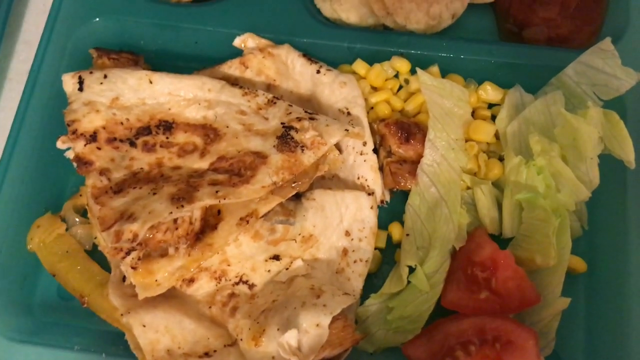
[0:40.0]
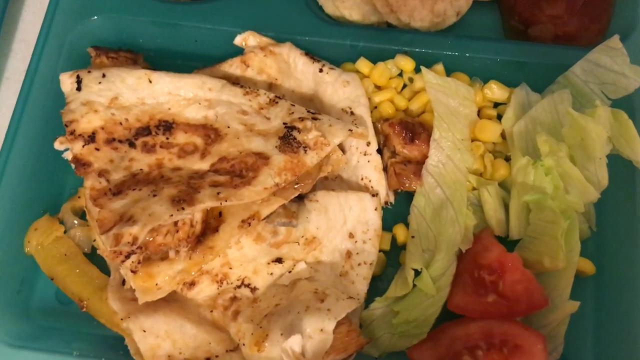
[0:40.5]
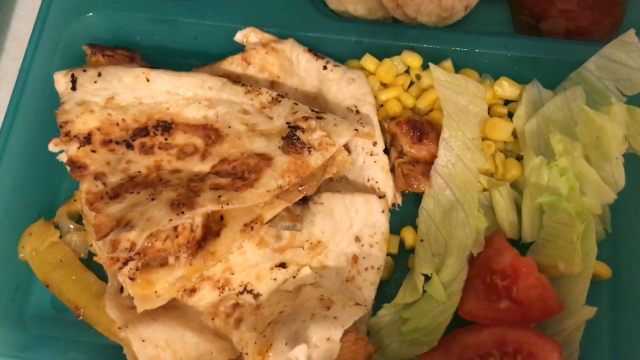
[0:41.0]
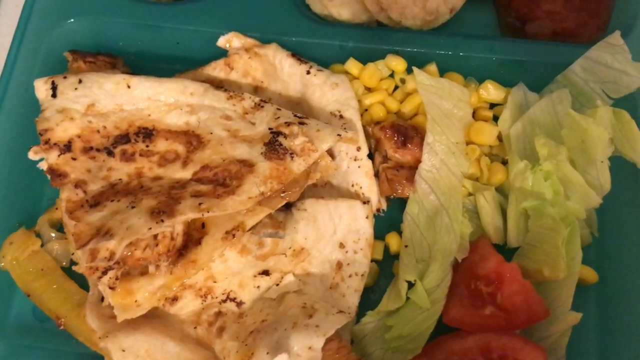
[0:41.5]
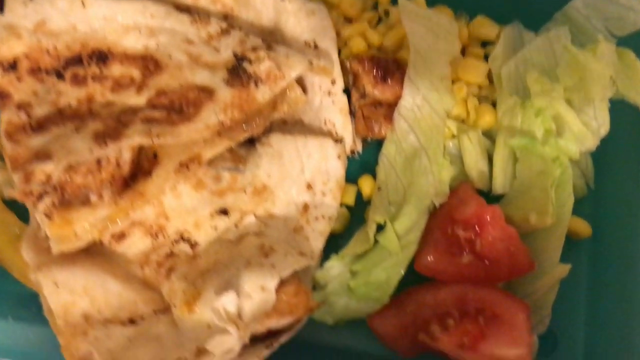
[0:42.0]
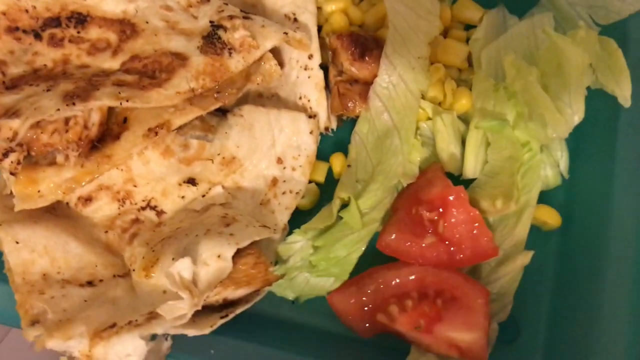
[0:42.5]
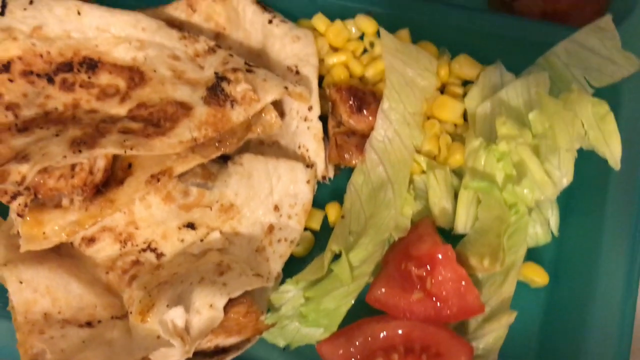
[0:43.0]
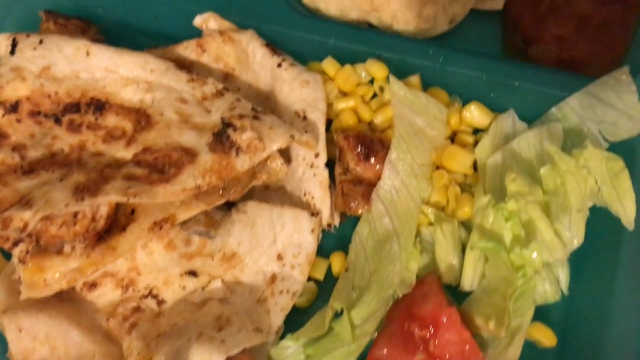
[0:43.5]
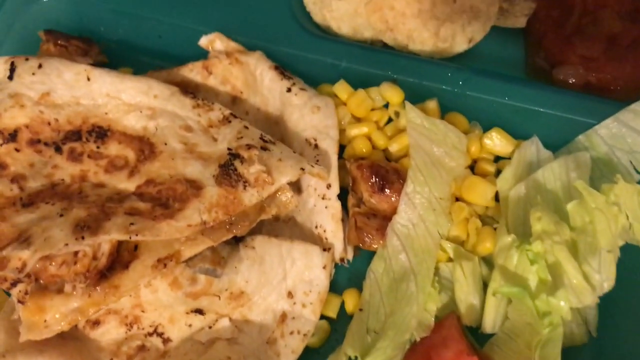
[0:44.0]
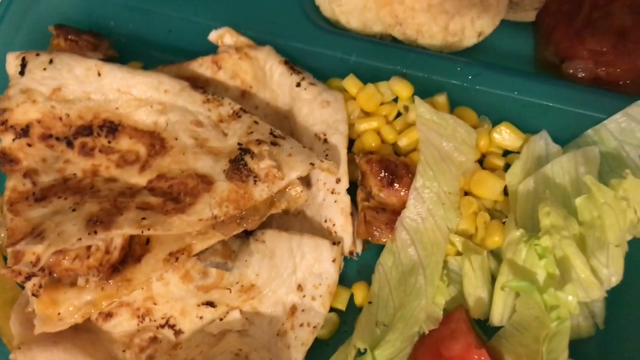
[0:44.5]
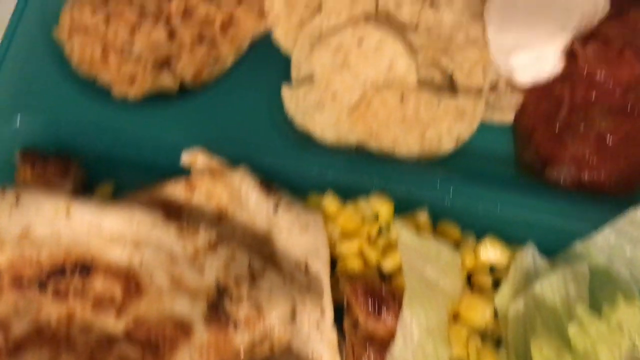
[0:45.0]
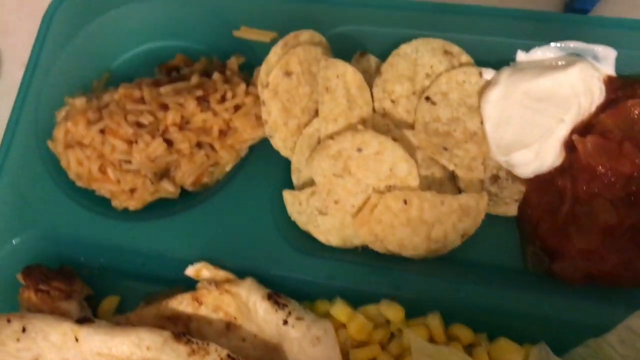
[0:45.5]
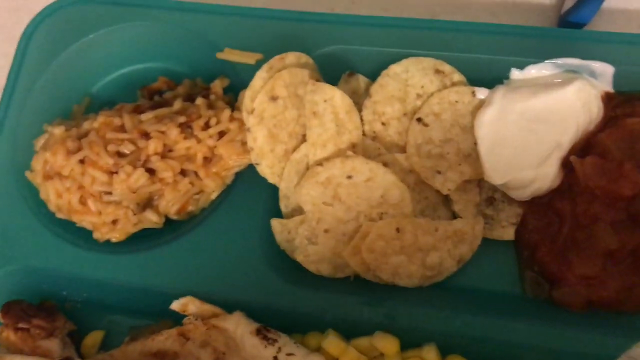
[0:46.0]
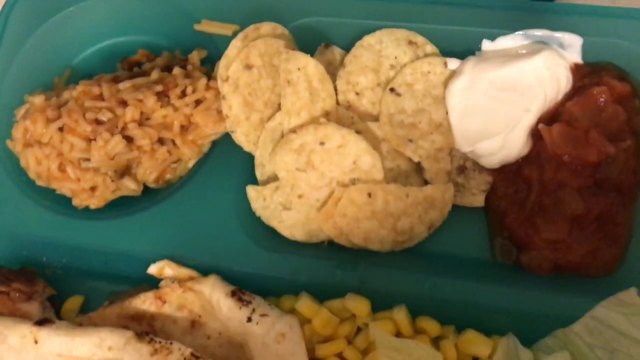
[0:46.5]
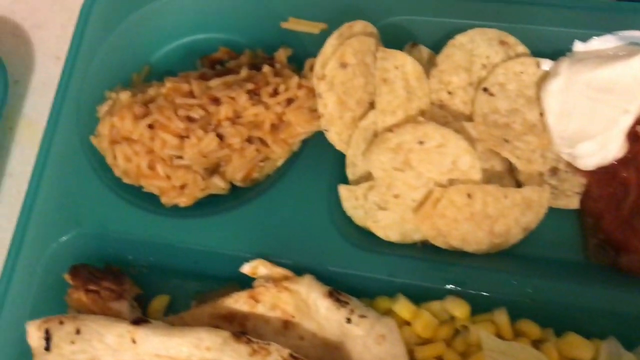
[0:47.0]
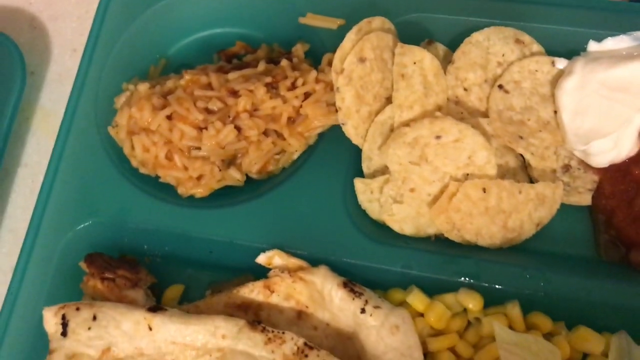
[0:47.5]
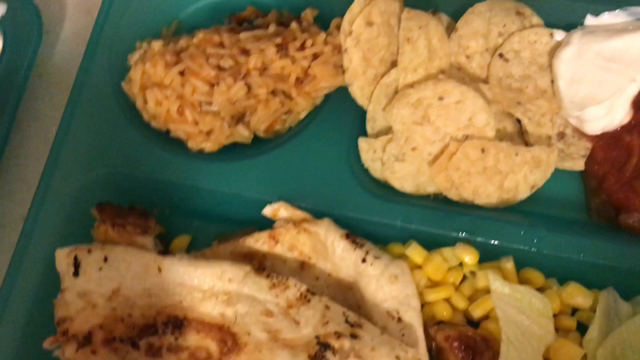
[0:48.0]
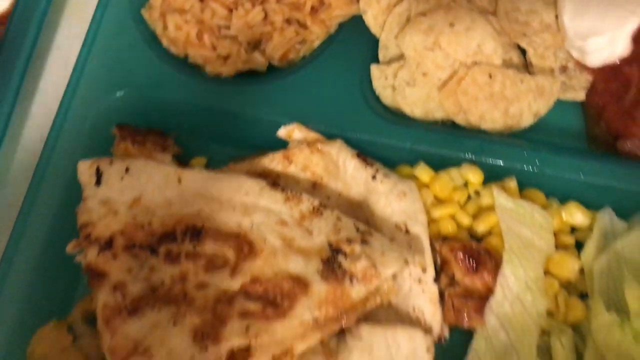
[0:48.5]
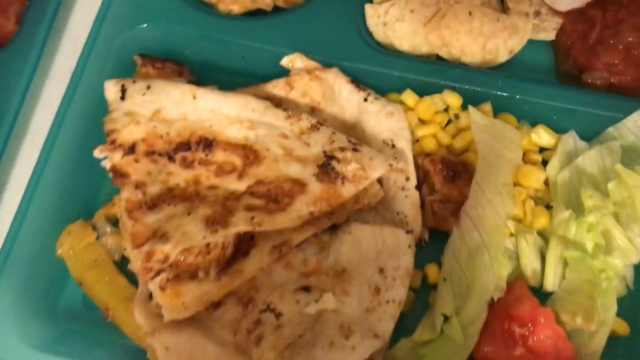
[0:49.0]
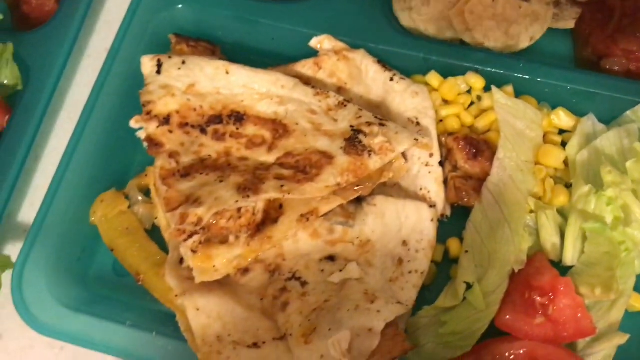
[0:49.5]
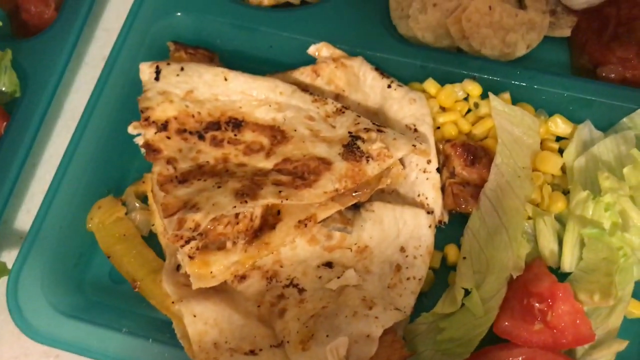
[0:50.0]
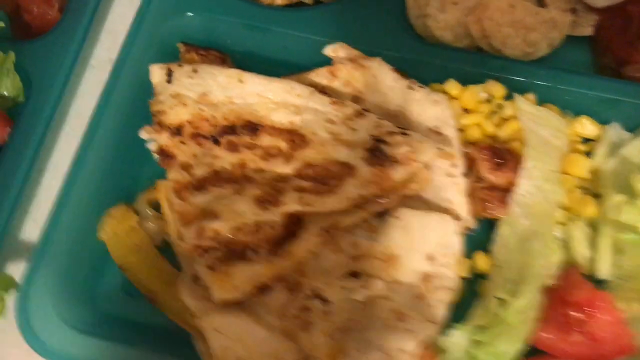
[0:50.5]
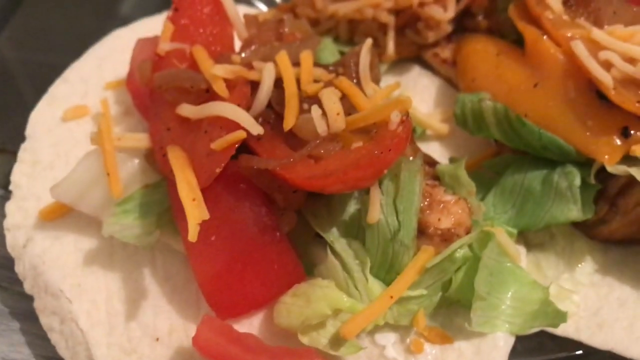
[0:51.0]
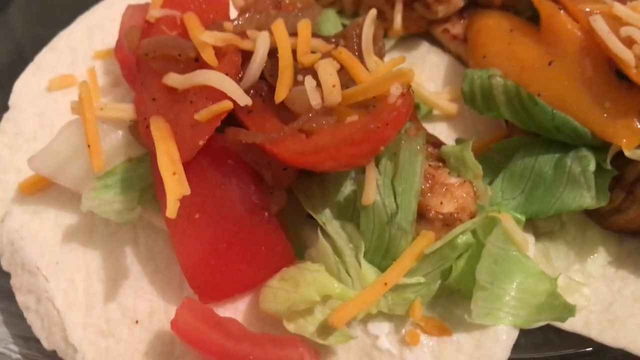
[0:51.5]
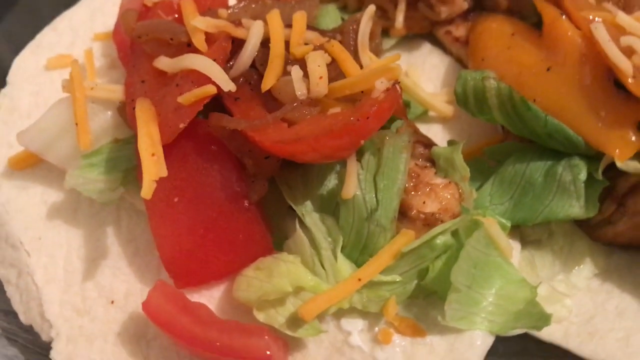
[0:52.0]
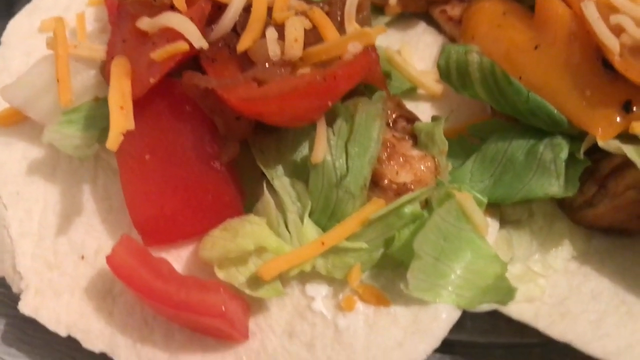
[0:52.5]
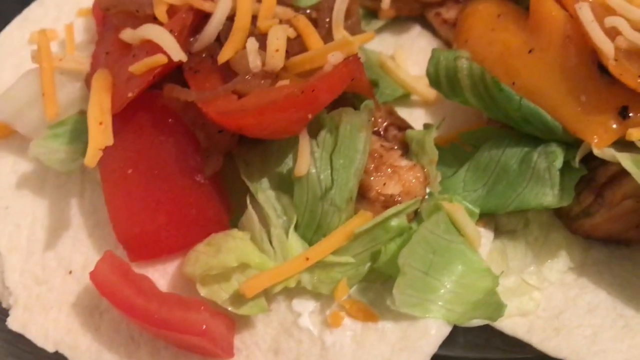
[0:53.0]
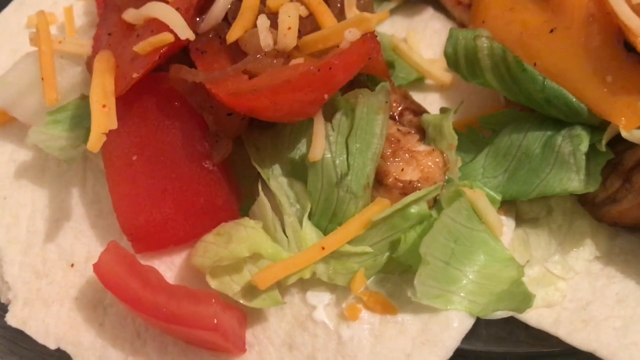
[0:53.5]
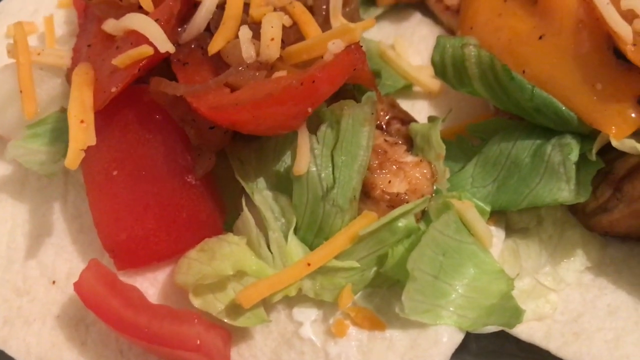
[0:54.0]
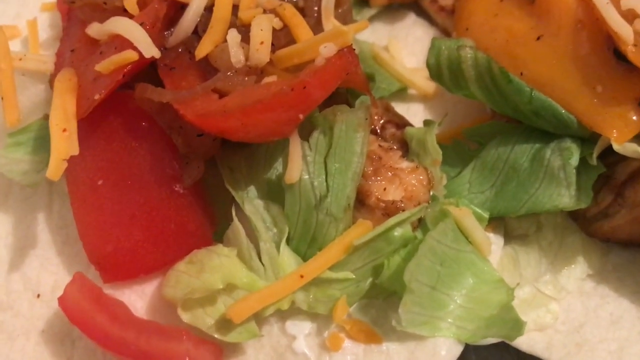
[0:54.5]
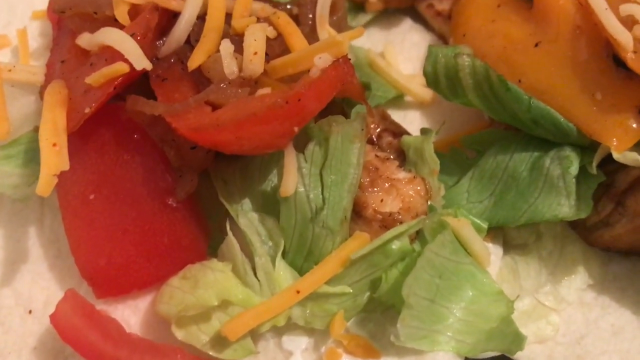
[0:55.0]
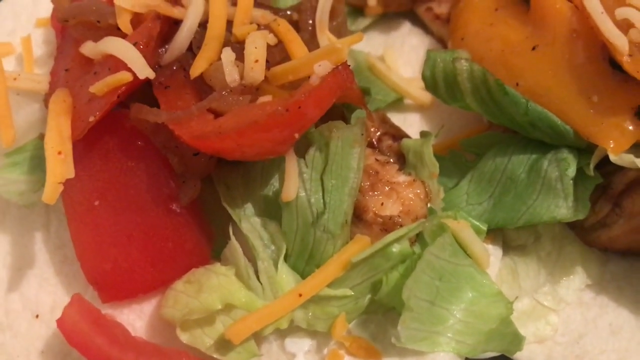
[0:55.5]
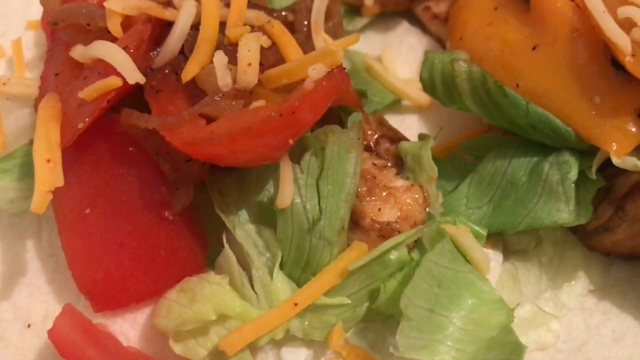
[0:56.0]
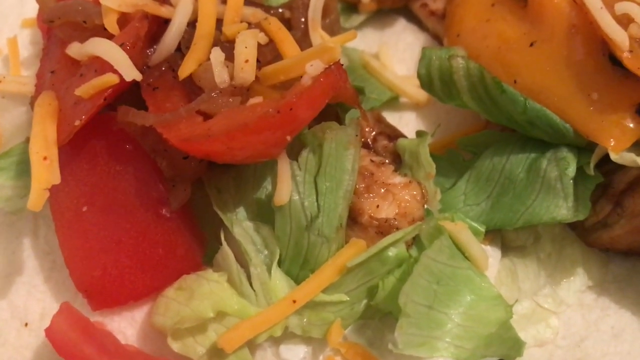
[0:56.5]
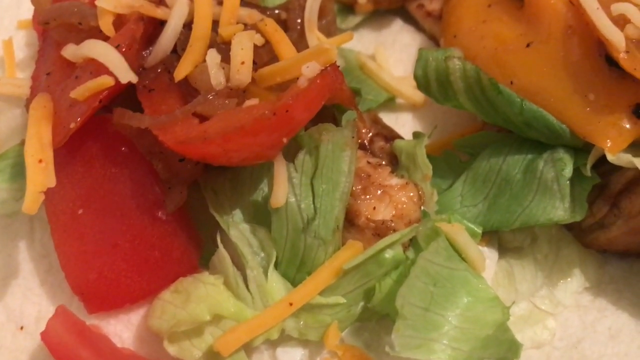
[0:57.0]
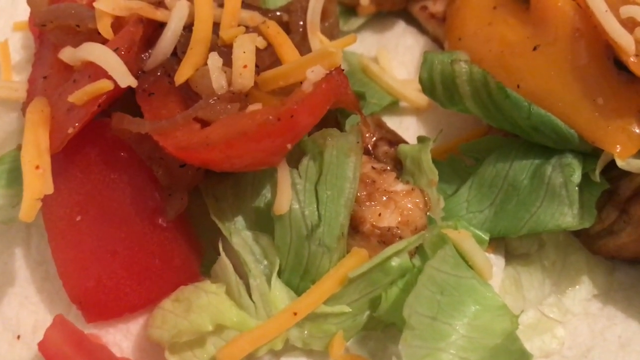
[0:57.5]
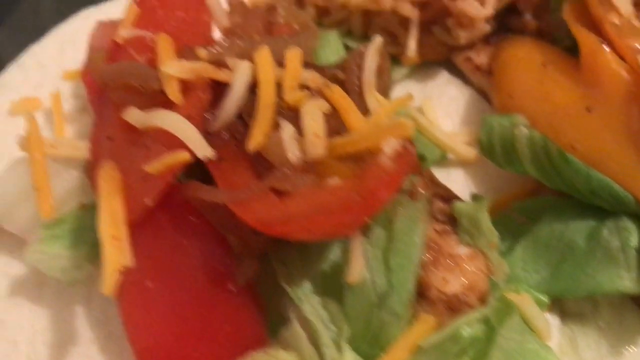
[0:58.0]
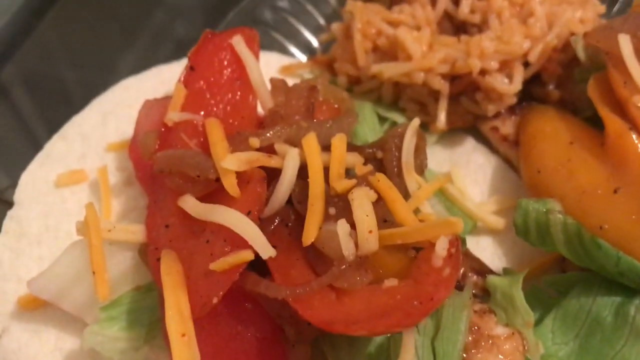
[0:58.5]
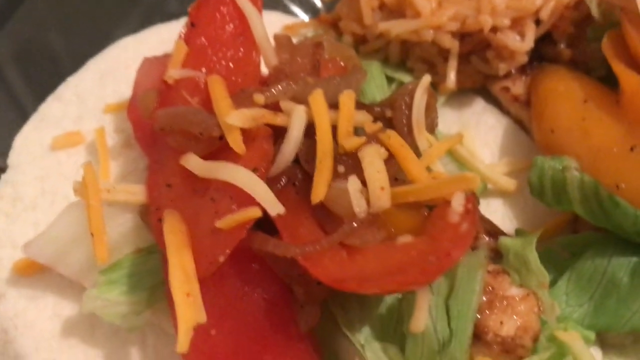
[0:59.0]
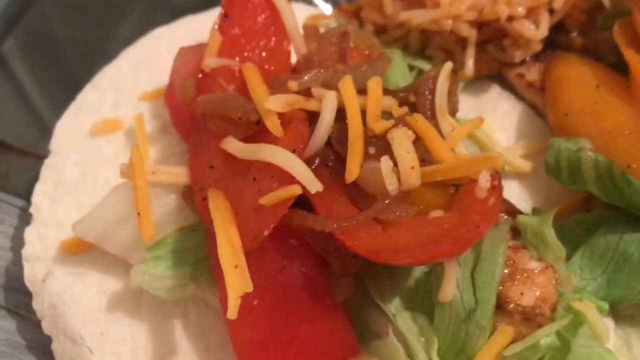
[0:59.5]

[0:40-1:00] A zoomed-in shot shows a chicken fajita quesadilla. Corn, lettuce and tomato are on the right side of the tray, which the person recording seems to show off. In the top left corner of the tray there is a small amount of brownish-white rice. On the right side of the tray are small round tortilla chips, sour cream and salsa. Hand gestures cast shadows over the plate, apparently as the person talks about it. The video then switches to a very close-up shot that is hard to make out, showing lettuce, cheese, tomato and chicken, possibly with a tortilla underneath. A small glimpse of rice is visible in the upper right corner of the frame. There also appears to be bell pepper on the right side of the screen: something orange that looks similar to the orange bell pepper that was sitting on the counter during the cooking portion.